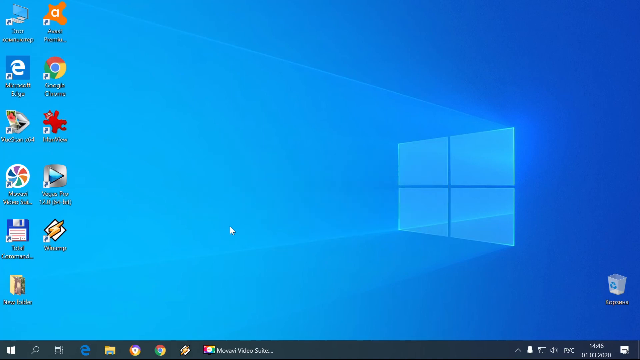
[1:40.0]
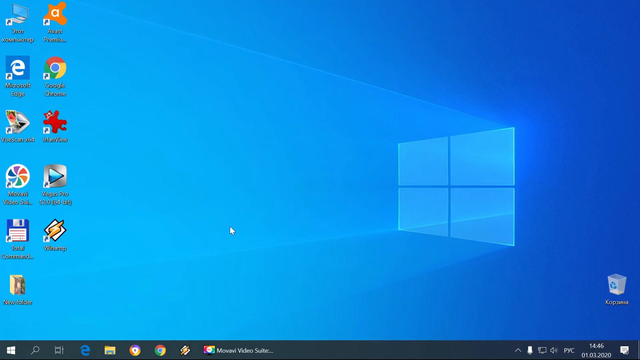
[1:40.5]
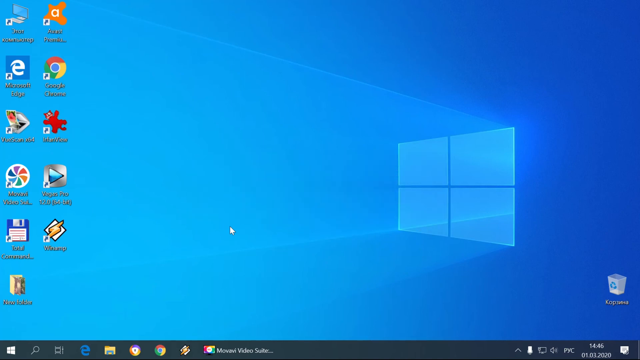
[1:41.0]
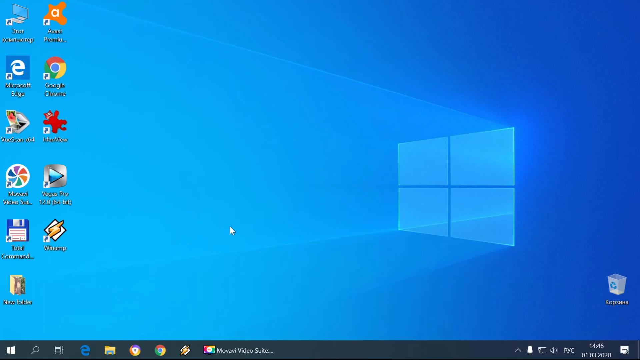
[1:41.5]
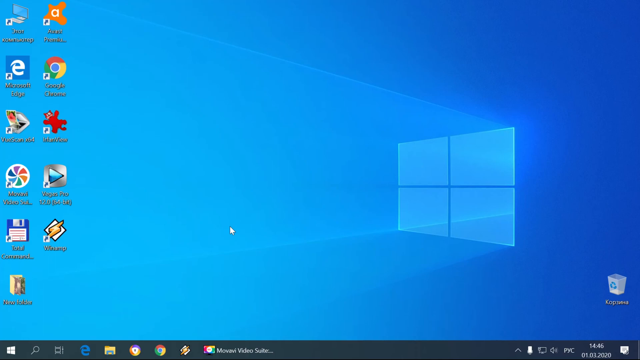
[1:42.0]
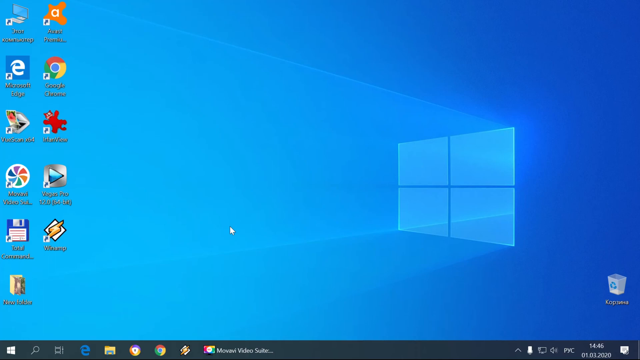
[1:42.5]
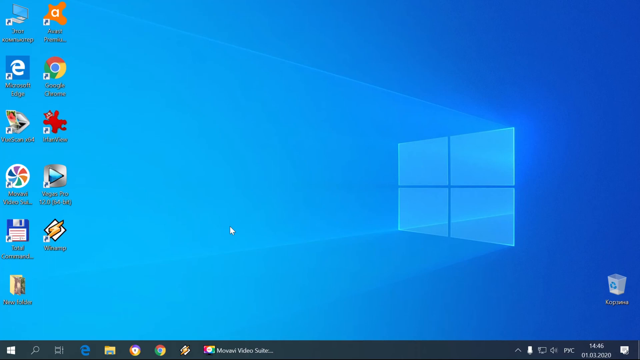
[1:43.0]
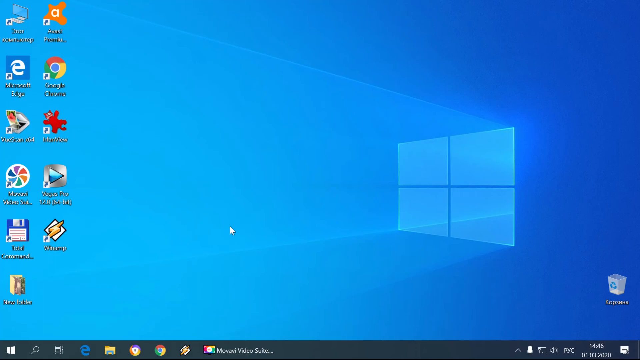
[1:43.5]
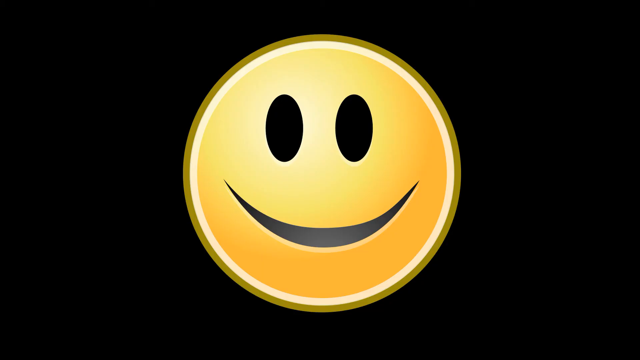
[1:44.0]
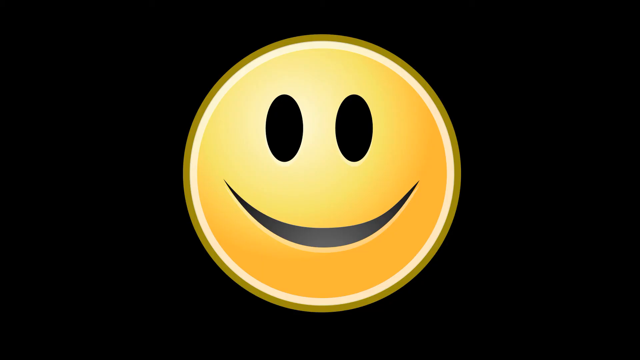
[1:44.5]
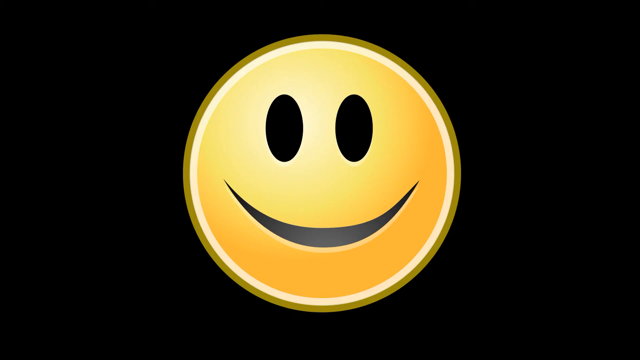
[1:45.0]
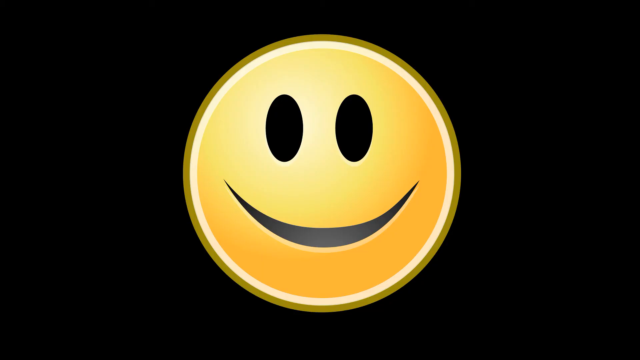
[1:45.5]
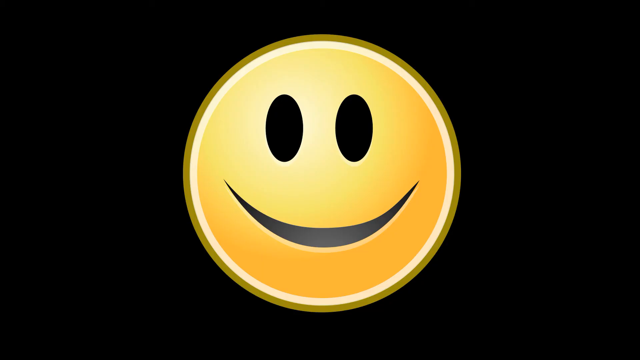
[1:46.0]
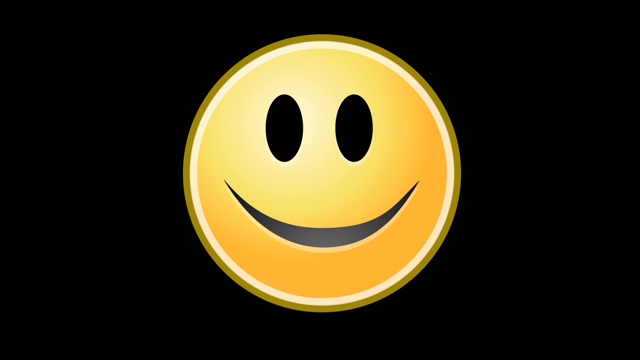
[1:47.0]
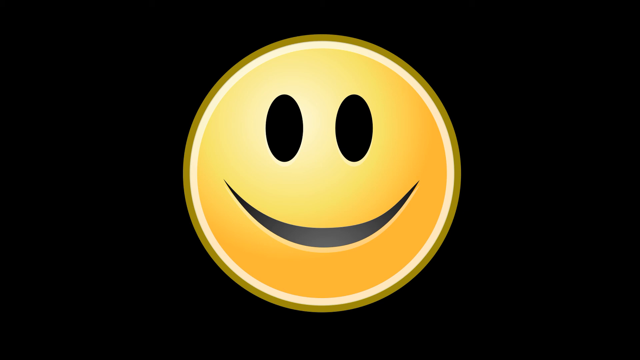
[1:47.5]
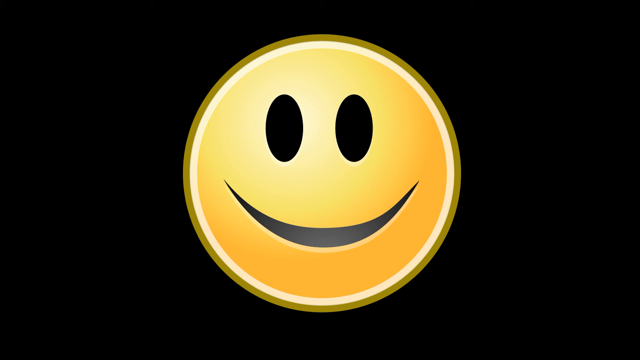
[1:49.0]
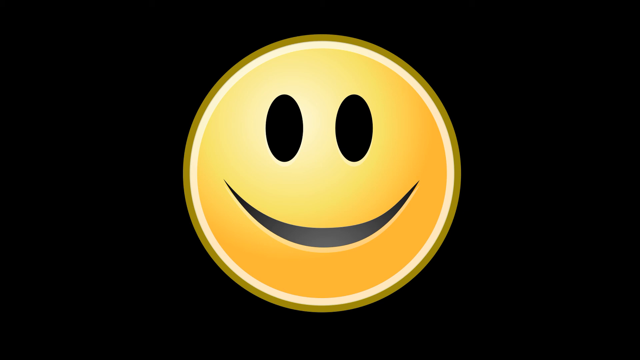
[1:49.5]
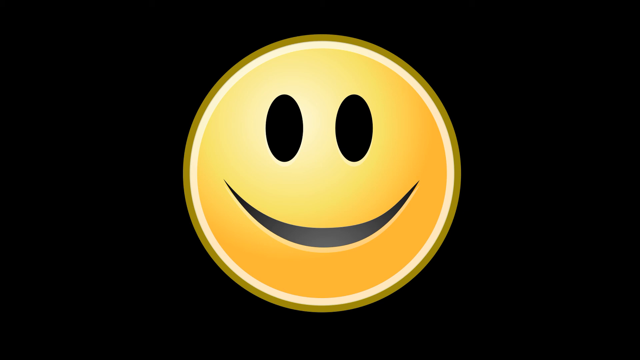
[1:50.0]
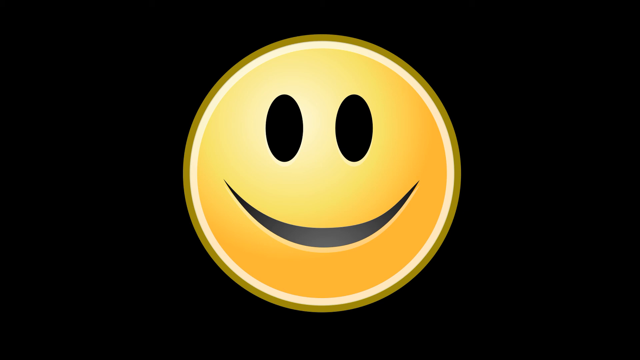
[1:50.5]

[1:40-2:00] A screen grab shows someone's Windows home screen with the classic blue Windows background, featuring a four-paned window on the right side toward the center. On the left side are 11 apps stacked into columns. Next, a screen with a black background shows a giant yellow smiley face with a sort of white margin, taking up 80% of the height of the screen. It lingers for 15 seconds or so, and then the screen fades to black for a few more seconds, with nothing happening.